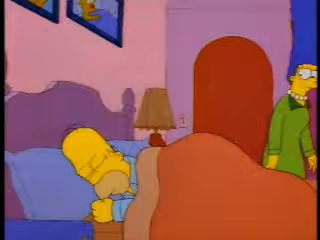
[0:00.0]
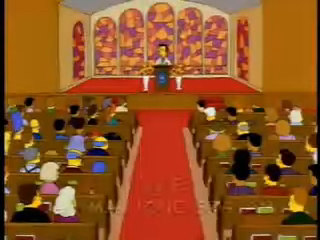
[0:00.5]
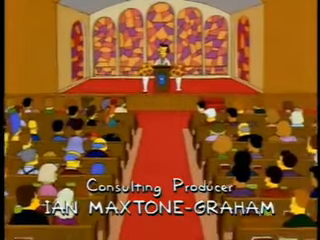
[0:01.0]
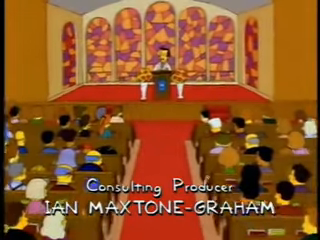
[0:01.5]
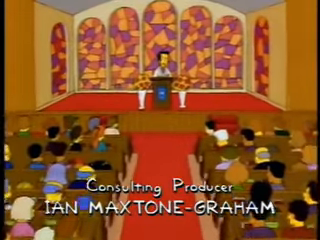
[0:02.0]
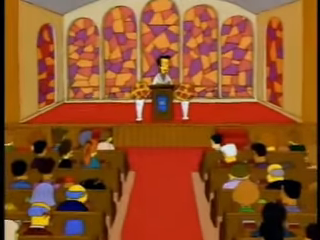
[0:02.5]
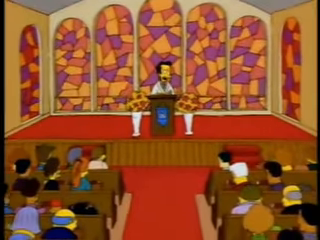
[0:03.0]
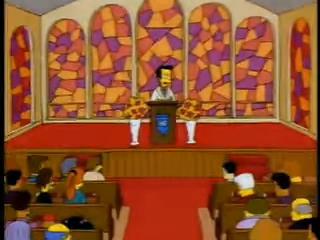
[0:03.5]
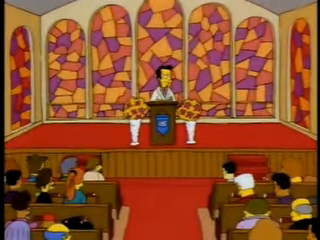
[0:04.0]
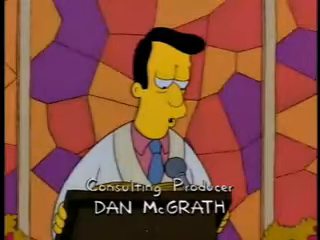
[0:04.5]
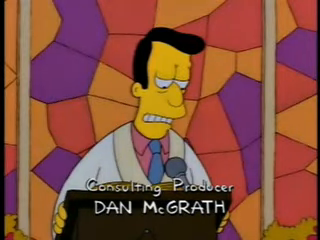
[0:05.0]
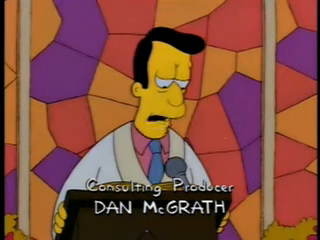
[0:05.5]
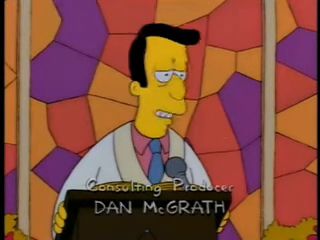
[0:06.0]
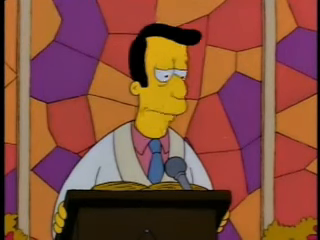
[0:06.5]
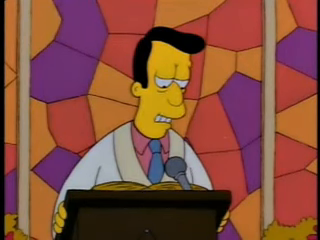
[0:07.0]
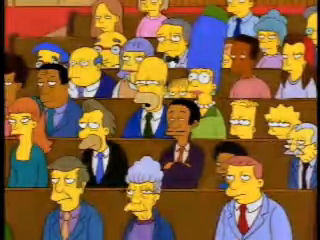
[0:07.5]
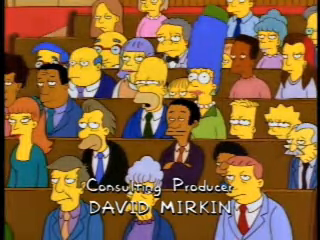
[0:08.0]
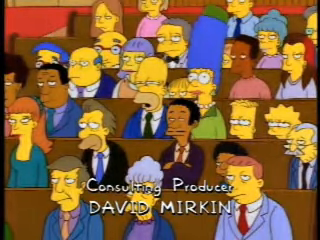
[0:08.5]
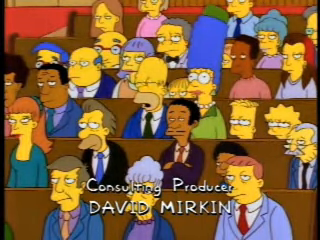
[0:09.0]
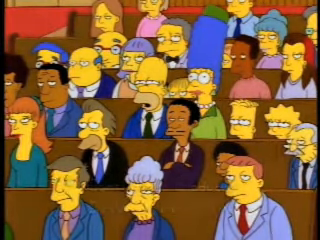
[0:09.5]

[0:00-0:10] Homer Simpson, a cartoon character, lies in bed on his right side. The headboard is purple, his pillows are blue, and his cover is orange. Standing on the right side of the bed is his wife Marge, a cartoon character in a green dress with tall blue hair. There is a lamp on the table beside the bed. The scene cuts to the inside of a cartoon church, and along the bottom of the screen the text reads "Consulting Producer Ian Maxton Graham." At the top of the screen is the stage, with church glass behind a cartoon pastor who faces the camera, while people in the pews face away from the camera toward the pastor. A close-up then shows the preacher, a cartoon character with black hair wearing a white robe over a pink button-up shirt and a blue tie. Along the bottom of the screen the text reads "Consulting Producer Dan McGrath."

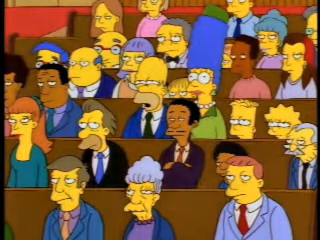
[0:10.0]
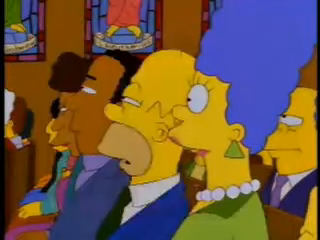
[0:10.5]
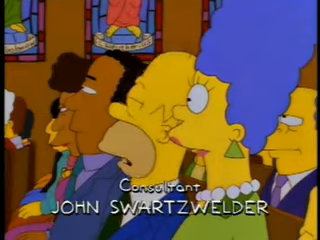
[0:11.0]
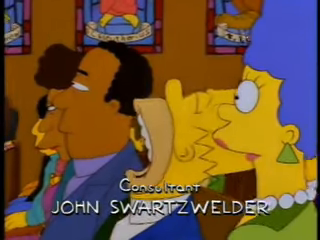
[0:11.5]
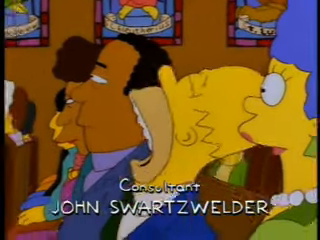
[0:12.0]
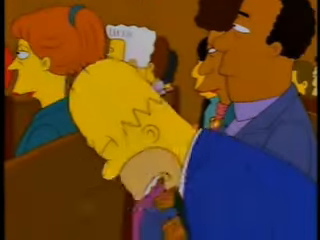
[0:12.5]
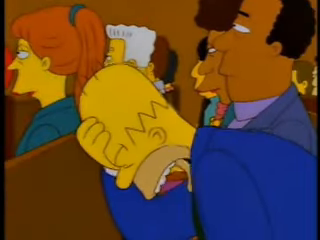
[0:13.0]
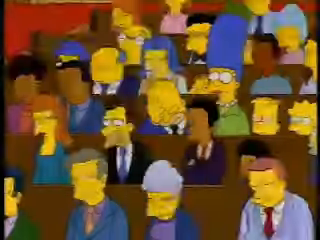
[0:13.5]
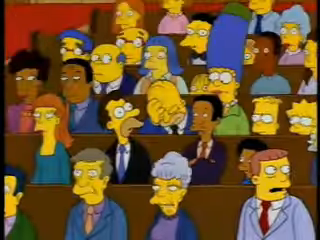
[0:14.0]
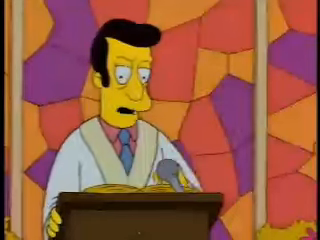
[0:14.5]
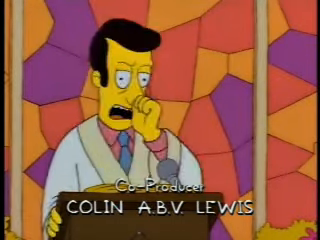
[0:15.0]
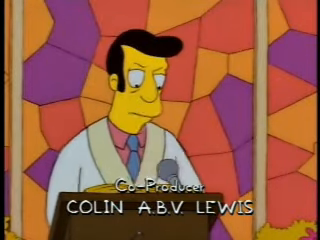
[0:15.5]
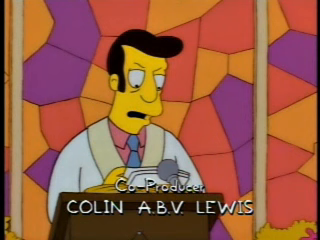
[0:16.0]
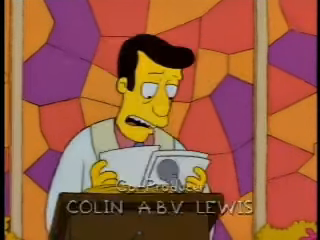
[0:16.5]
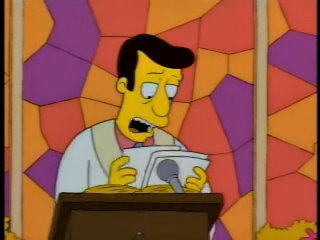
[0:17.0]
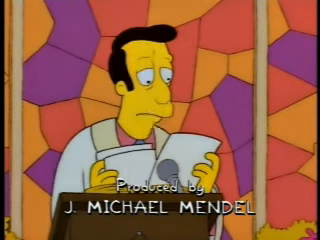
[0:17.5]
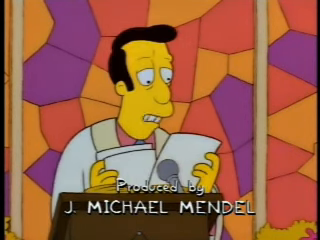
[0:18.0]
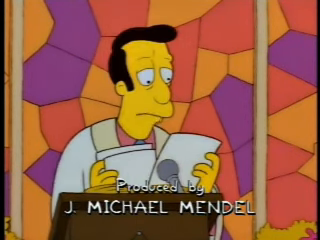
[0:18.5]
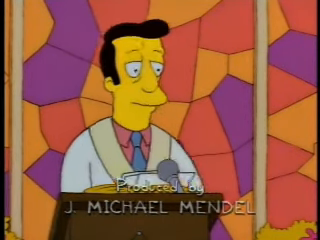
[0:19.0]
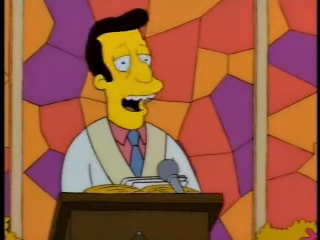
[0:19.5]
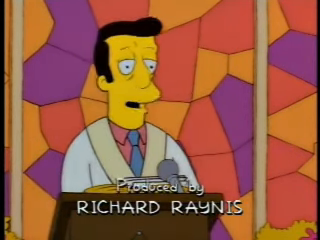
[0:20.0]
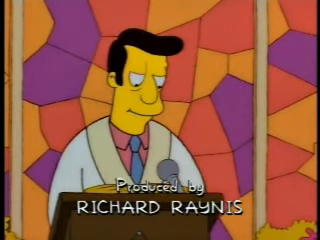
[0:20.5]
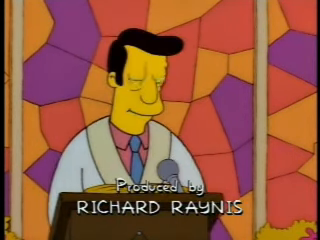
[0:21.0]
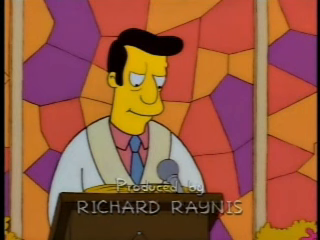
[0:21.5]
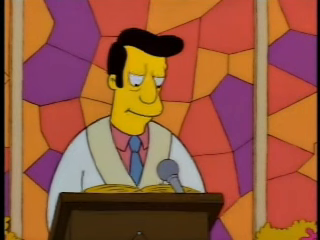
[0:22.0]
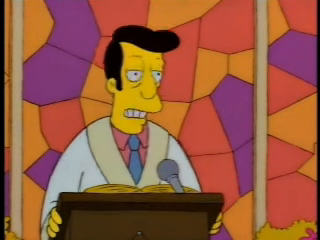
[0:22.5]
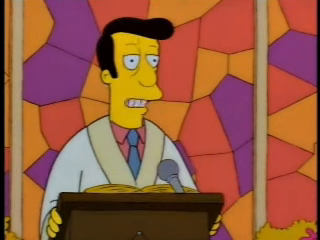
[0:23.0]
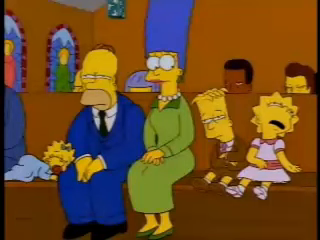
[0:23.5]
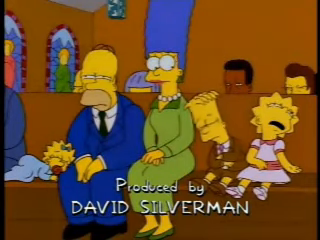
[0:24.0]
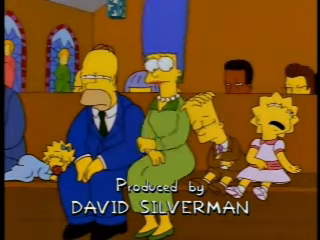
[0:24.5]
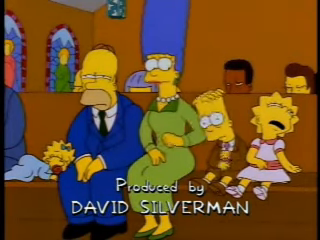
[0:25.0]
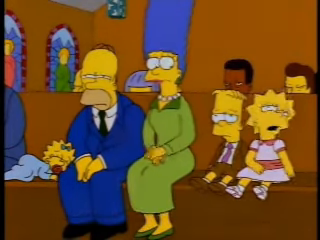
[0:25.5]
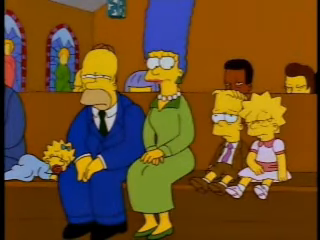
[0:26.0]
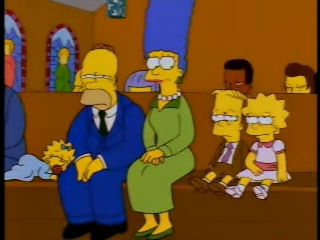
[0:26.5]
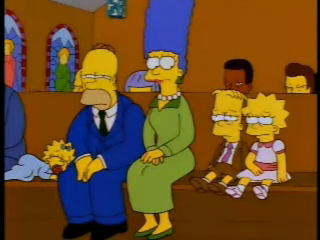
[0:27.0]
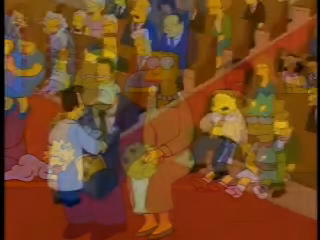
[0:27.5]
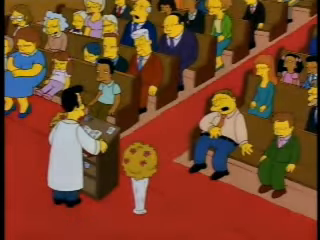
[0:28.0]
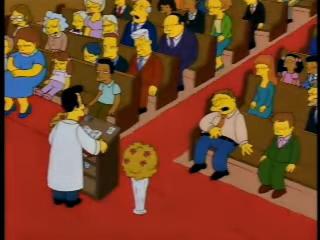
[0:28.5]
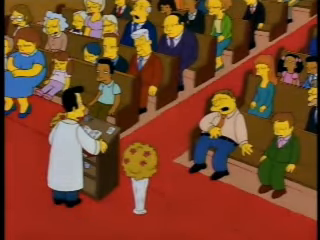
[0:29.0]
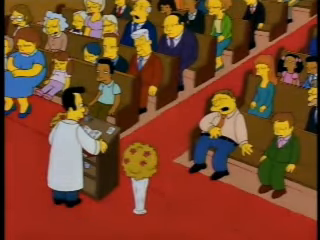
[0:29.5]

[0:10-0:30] Cartoon characters sit in a church pew. The first is Marge Simpson, with very tall blue hair. To her right is Homer Simpson, who is bald; he leans his head back with his mouth wide open and his eyes closed as if asleep. To his right is a black cartoon character wearing a blue jacket, and to that character's right is a black woman with black hair. Along the bottom of the screen the text reads "Consultant John Swartzwilder." Homer, still sleeping, leans forward and hits his head on the pew in front of him. He wears a dark blue suit jacket and a black tie. The view then shows the audience in the pews beside him. The pastor up on the stage looks at him for hitting his head on the pew and making so much noise. The pastor then takes pieces of paper and reads from them, and people in the audience fall asleep listening to the preacher.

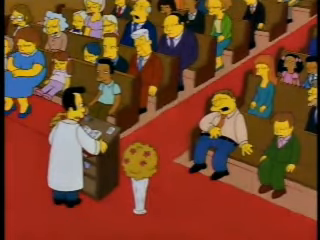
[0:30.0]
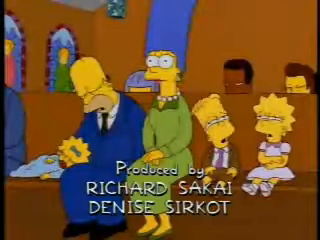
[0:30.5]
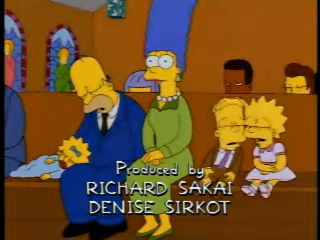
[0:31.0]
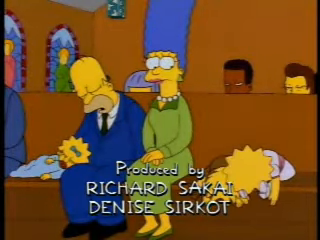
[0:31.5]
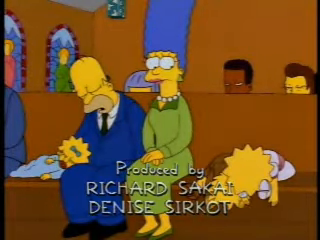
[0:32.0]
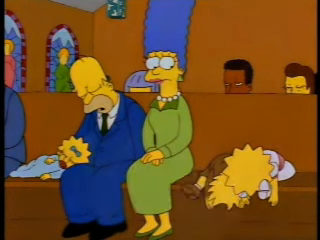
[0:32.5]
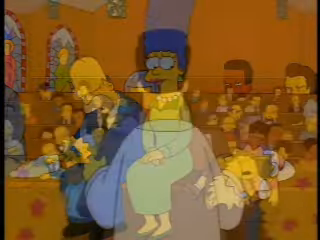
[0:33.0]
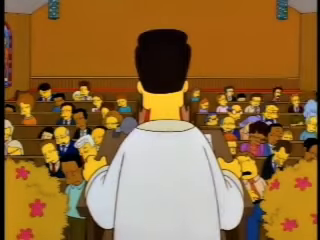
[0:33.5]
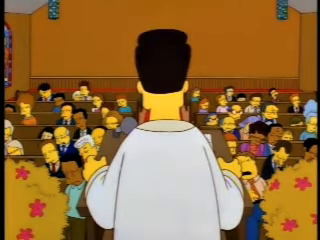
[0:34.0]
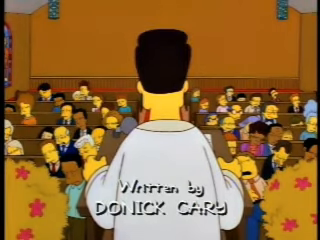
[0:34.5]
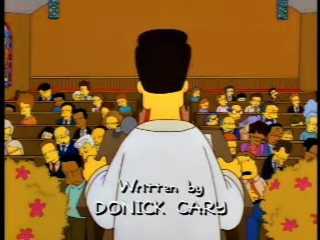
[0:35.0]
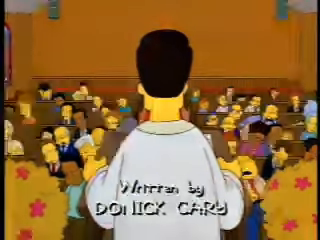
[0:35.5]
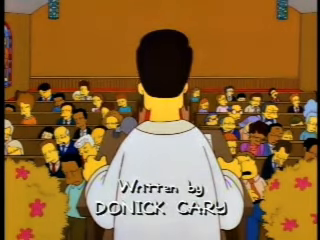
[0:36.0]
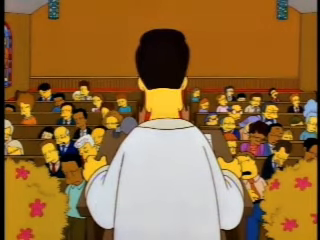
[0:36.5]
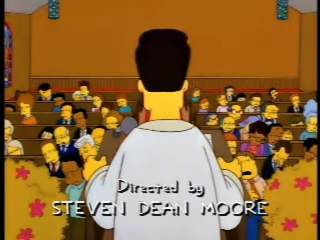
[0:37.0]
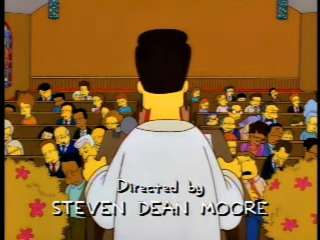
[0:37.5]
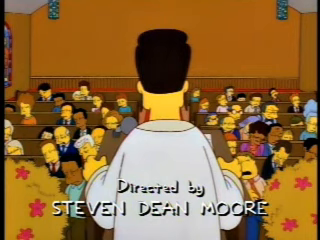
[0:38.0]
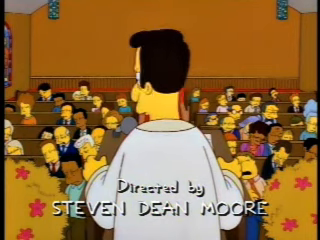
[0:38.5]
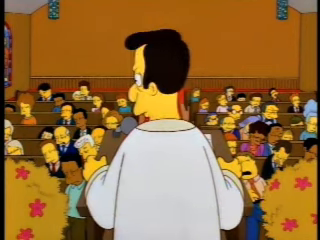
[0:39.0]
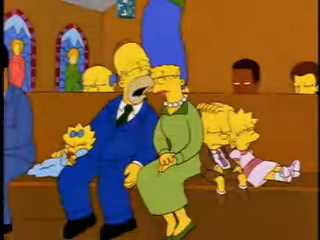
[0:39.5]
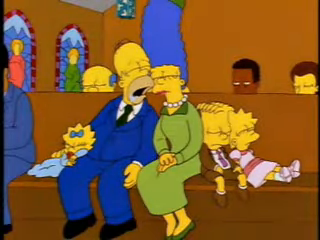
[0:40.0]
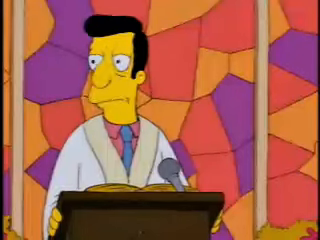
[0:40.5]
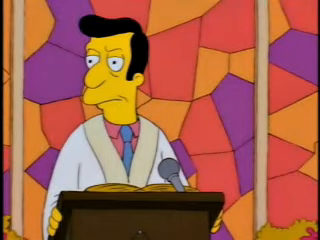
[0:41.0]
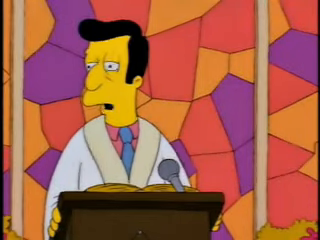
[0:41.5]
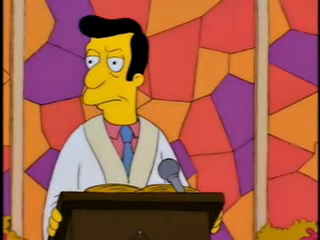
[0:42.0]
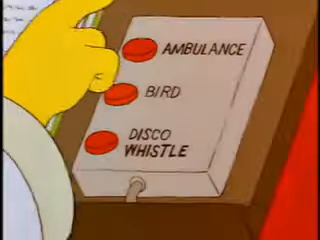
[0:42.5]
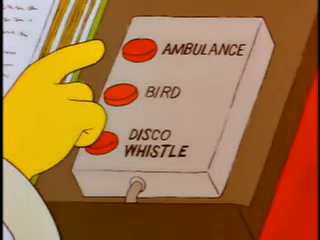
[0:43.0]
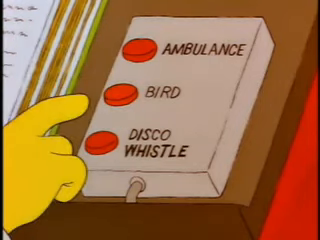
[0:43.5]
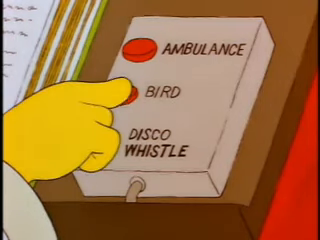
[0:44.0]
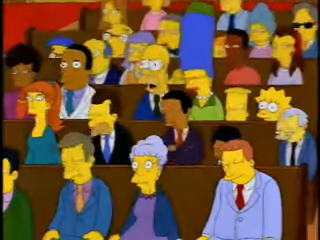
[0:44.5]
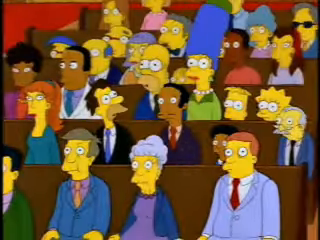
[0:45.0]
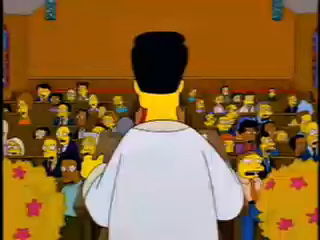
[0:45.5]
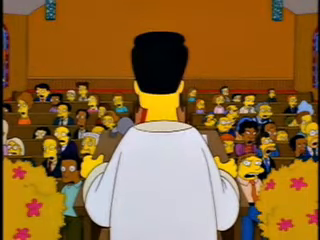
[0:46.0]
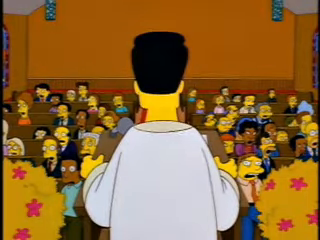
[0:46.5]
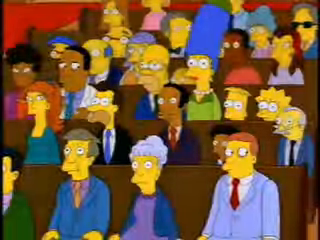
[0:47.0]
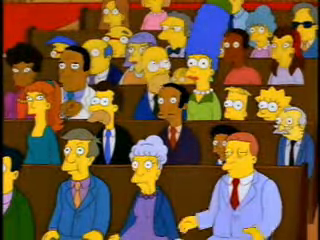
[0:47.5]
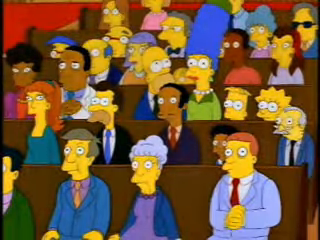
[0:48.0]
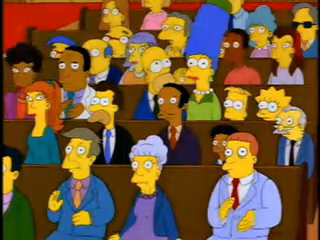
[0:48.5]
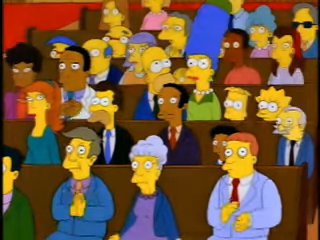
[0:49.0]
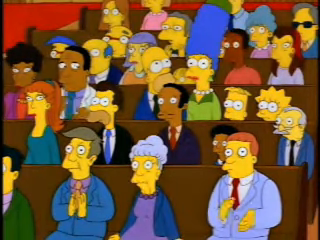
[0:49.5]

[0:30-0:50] In a cartoon church, Homer Simpson, a yellow man with a bald head wearing a dark blue suit, sits asleep on a pew. Sitting beside him to his left is Marge Simpson, wide awake, wearing a green dress, with long blue hair that goes straight up. Lying on Homer is a little cartoon baby in a blue onesie. To Marge's left is Bart Simpson, wearing a brown suit and brown shorts, asleep, and to his left is his sister Lisa in a light pink dress, also asleep; their heads touch as they sleep, and both children's feet are up off the ground because they are so short. The two kids lean forward and fall asleep. The scene cuts to a shot from behind the preacher, looking out over his shoulders; he wears a white robe, and everybody in the audience is asleep.